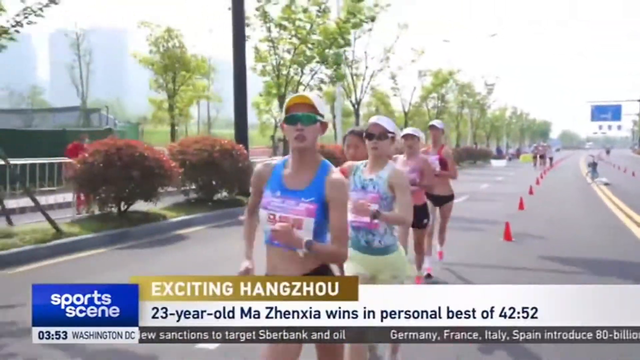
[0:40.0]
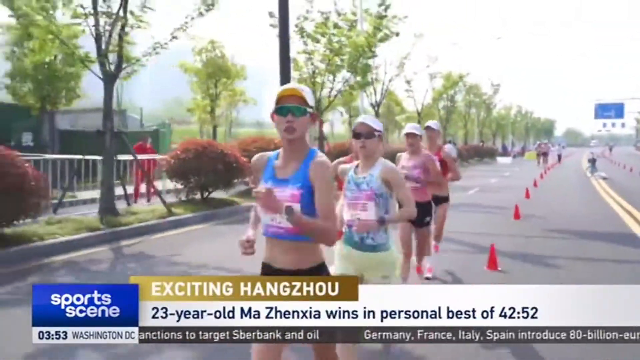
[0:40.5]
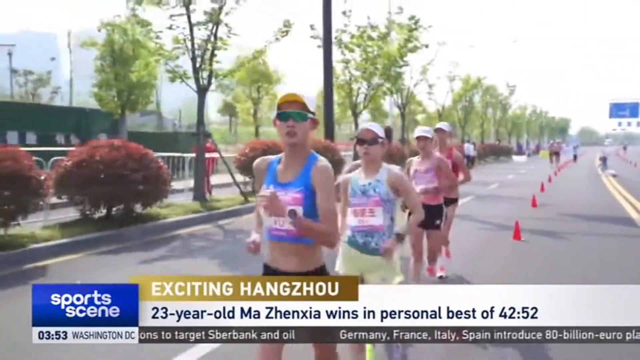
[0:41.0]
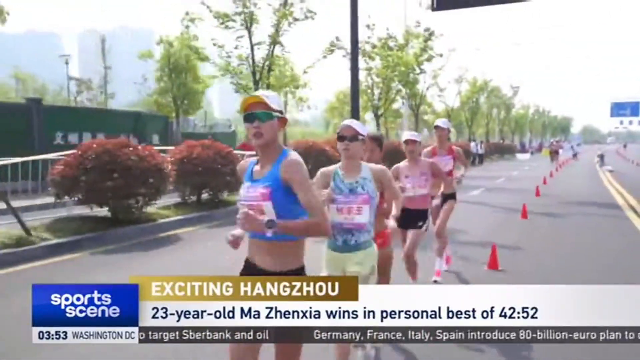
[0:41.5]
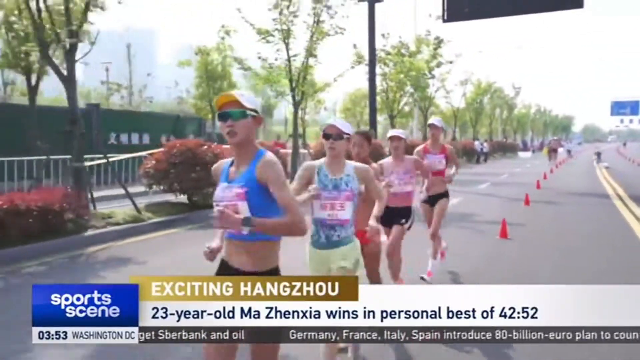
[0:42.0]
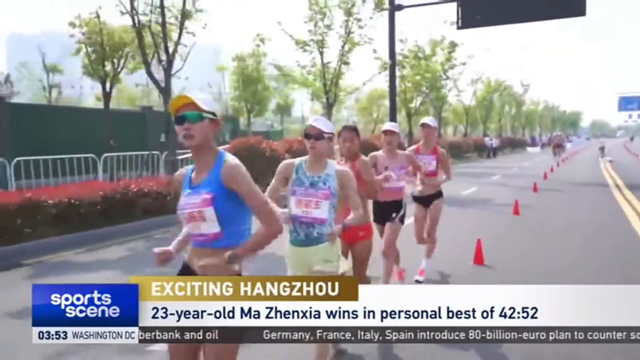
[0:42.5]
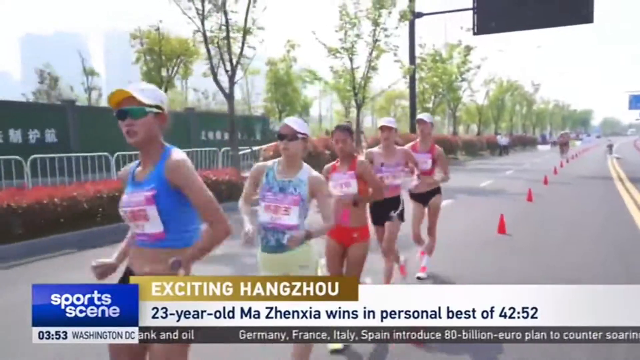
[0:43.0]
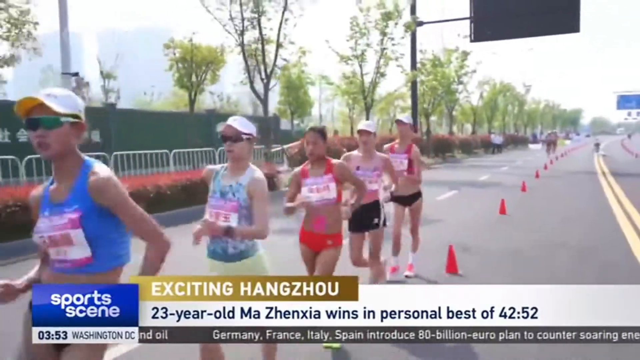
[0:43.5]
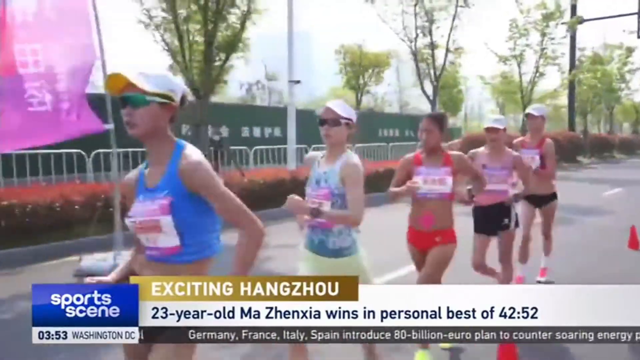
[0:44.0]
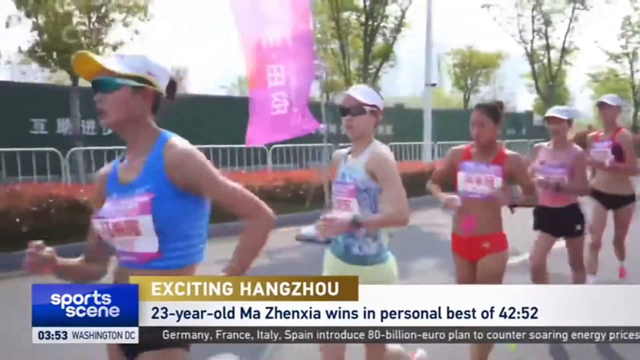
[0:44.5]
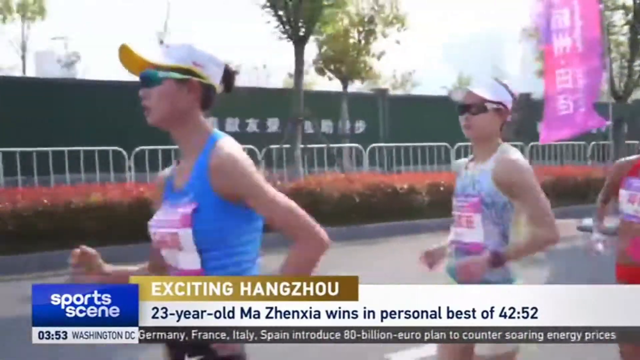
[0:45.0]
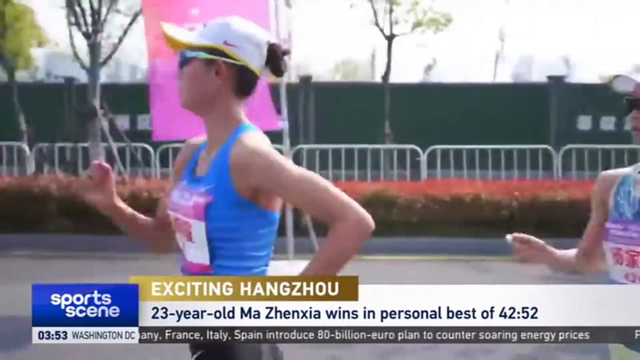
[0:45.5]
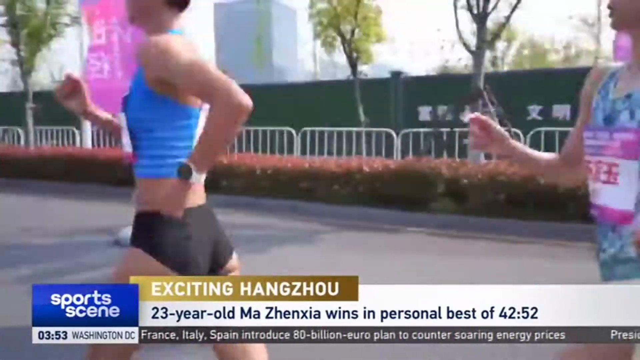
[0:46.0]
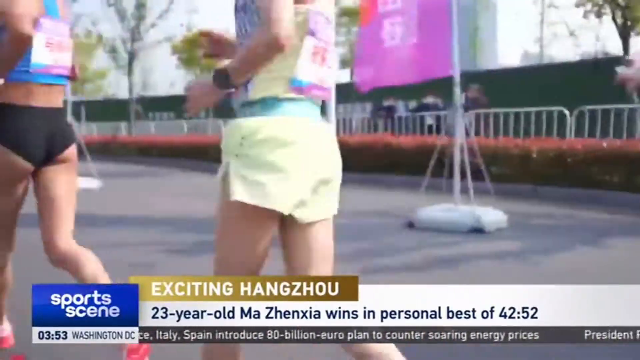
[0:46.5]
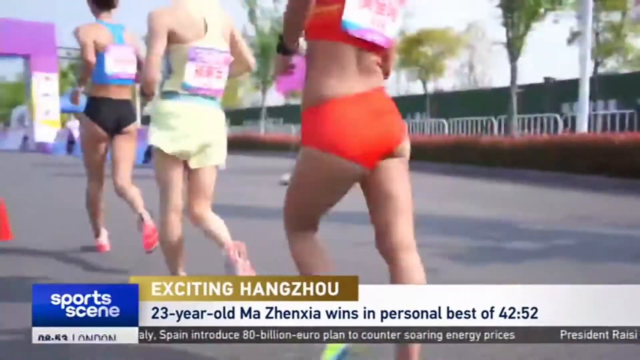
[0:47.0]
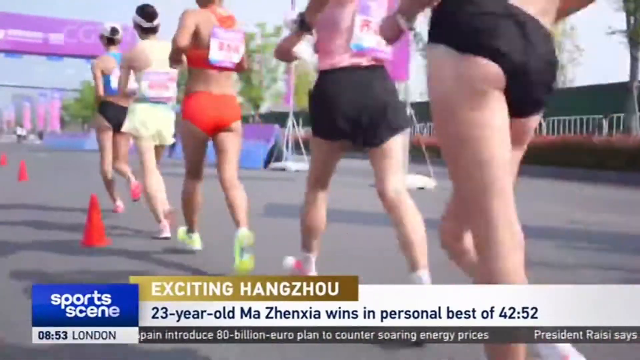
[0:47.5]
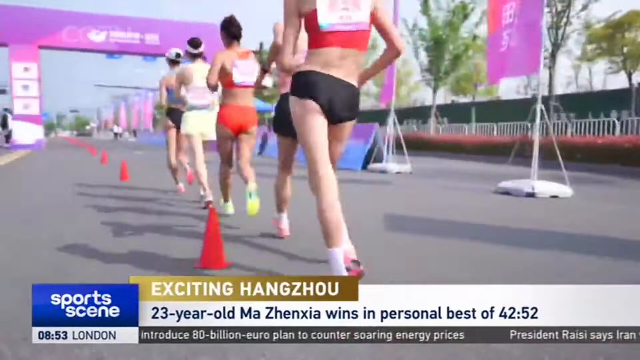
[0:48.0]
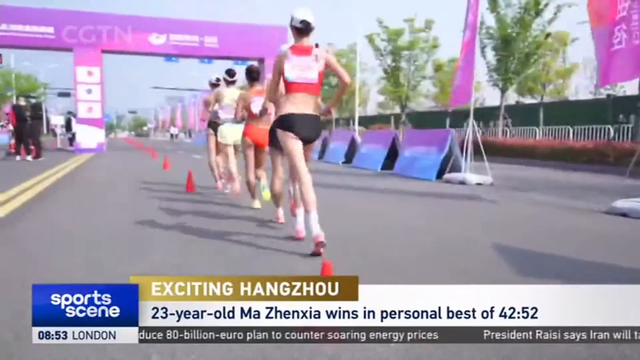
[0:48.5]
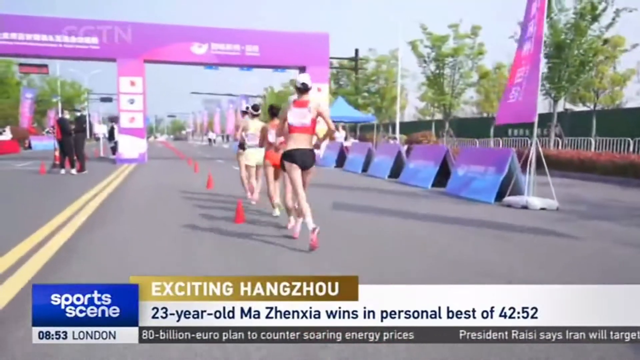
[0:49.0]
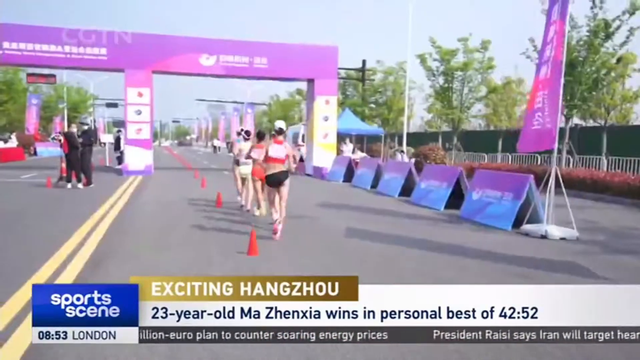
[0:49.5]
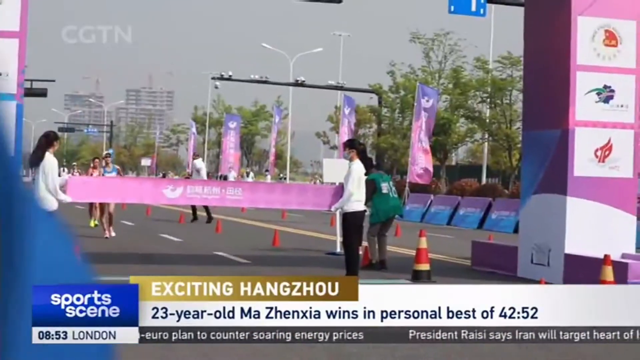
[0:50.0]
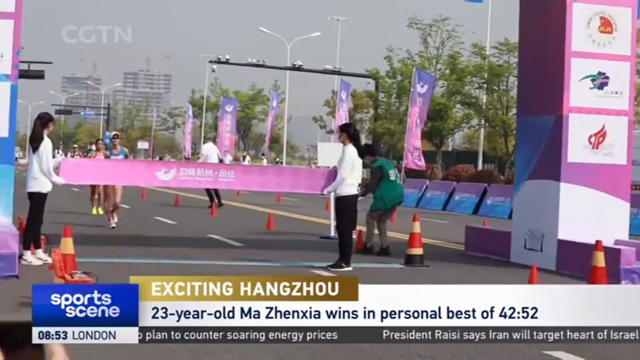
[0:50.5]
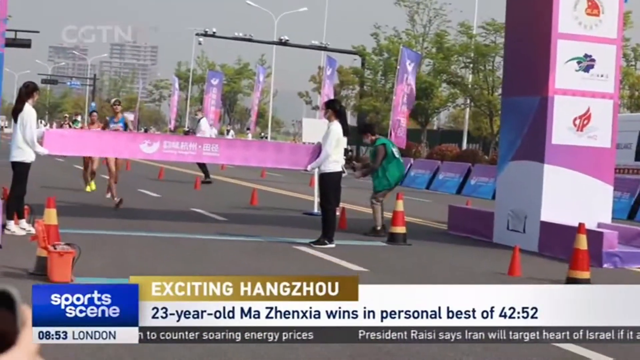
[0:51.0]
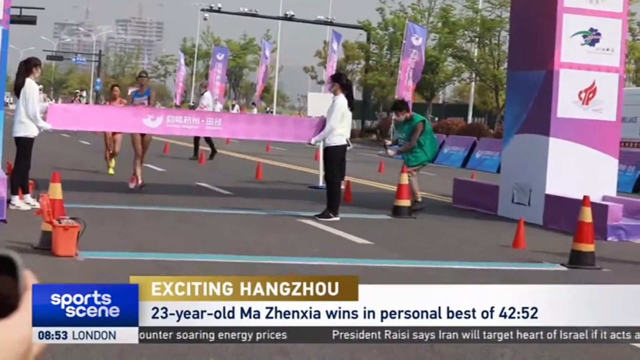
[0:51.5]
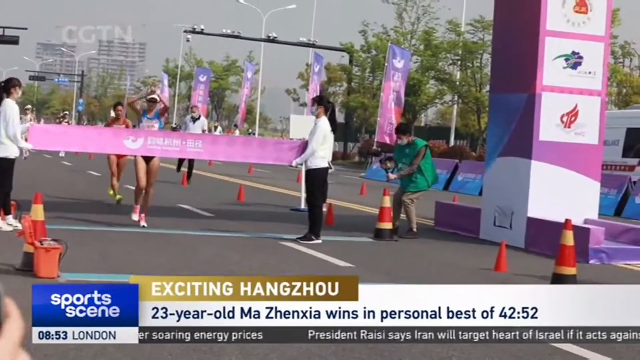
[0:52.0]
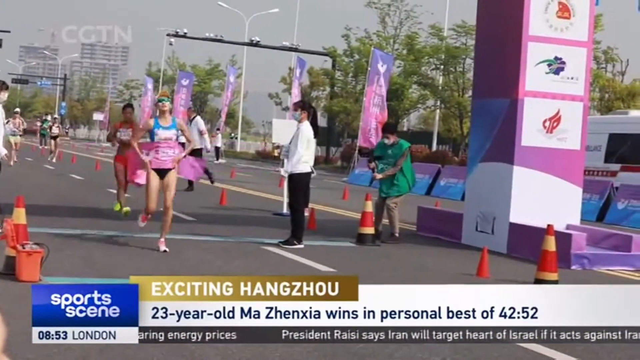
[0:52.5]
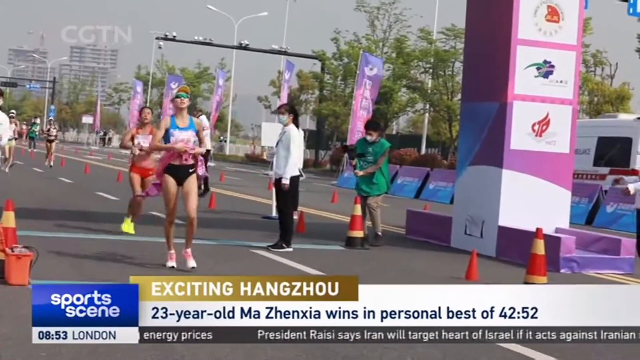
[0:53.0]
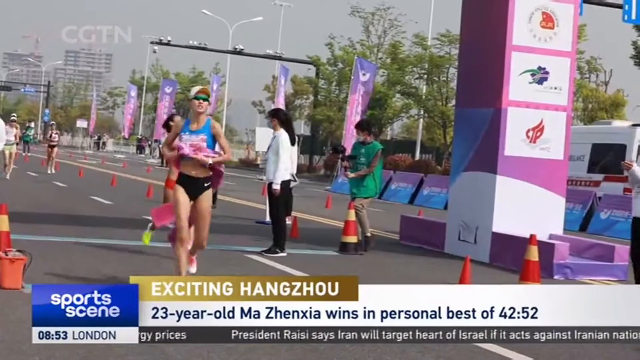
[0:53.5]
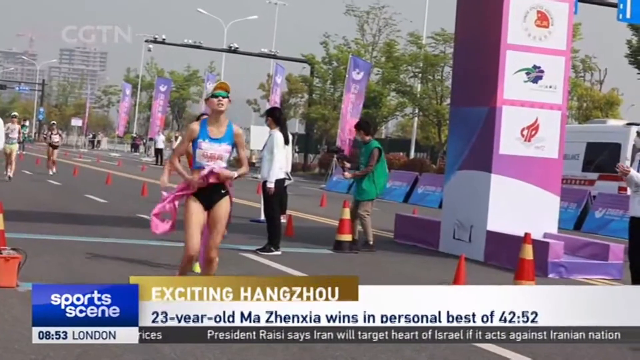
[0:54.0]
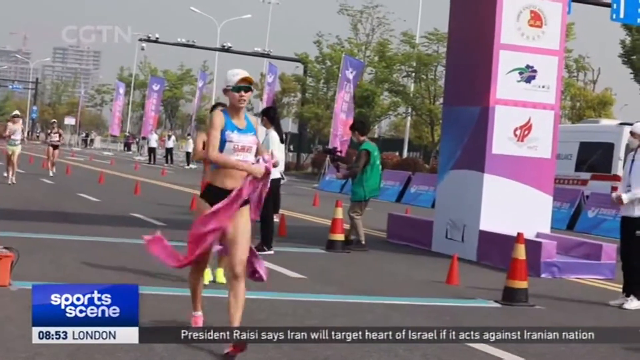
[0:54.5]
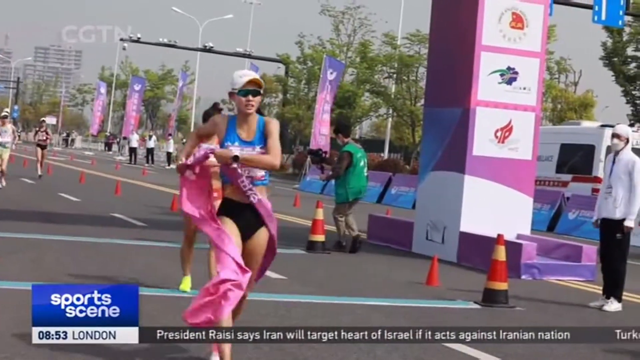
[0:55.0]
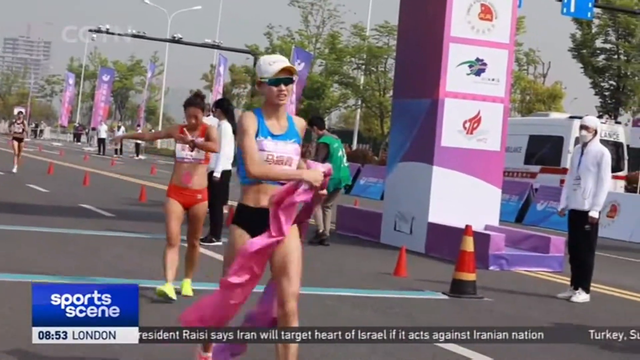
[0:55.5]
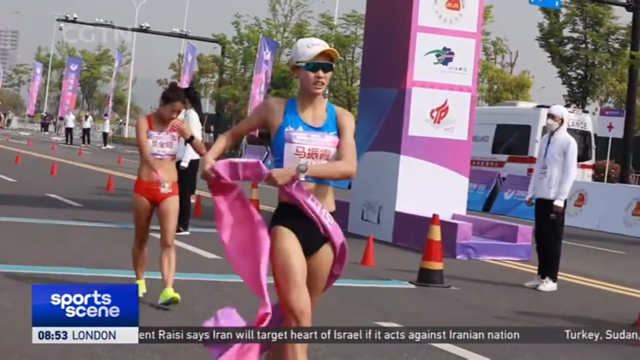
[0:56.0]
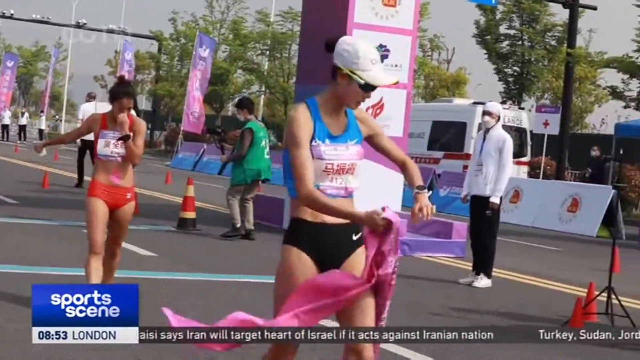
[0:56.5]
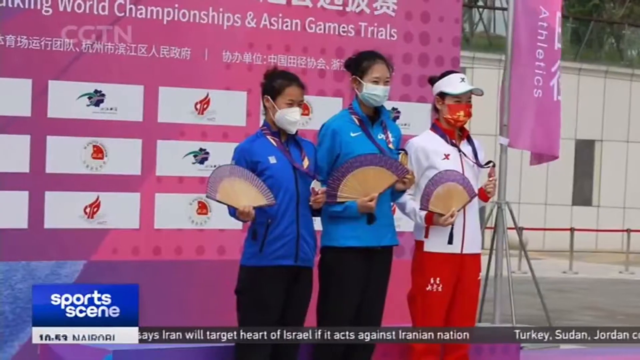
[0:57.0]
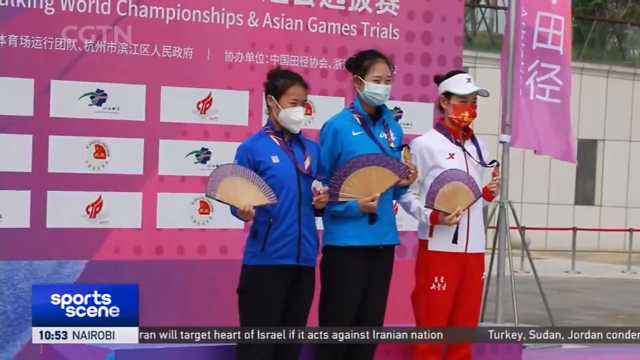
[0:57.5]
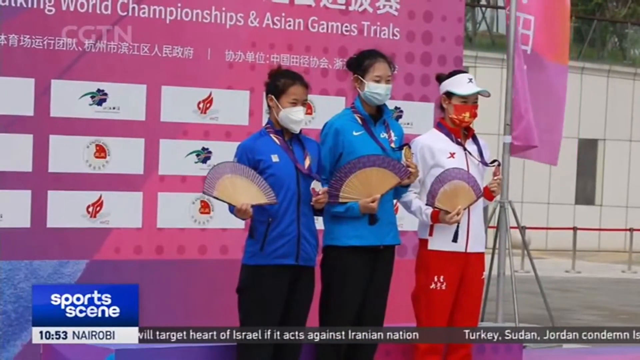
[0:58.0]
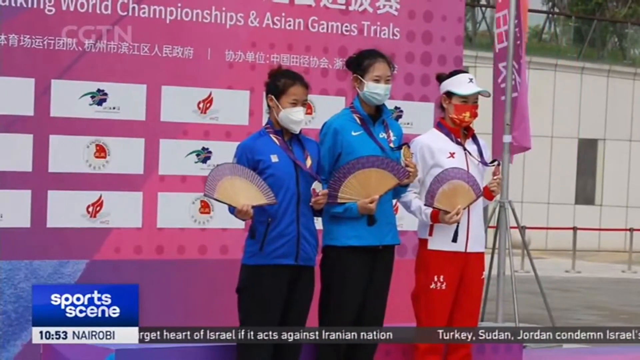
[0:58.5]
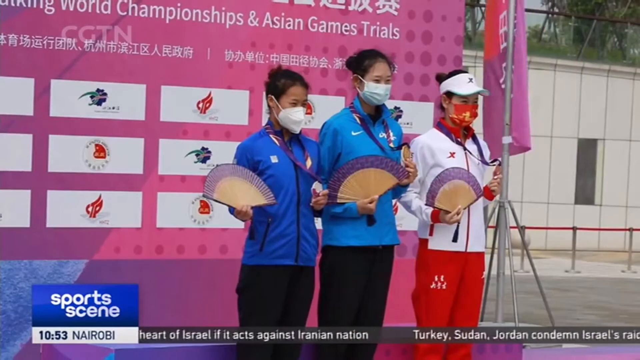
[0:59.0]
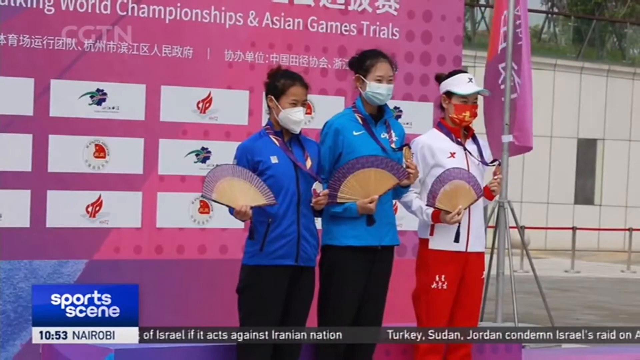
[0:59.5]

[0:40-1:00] A women's race is shown, with text below reading "23-year-old Ma Zhenxia wins." The runners continue down the road, all moving in the same style, almost as if walking as fast as they possibly can instead of running. The winner, wearing a blue tank top, runs through a pink flag, and many other runners follow. At the end, three women in masks, all holding fans, stand in front of a pink banner with the English text "World Championships in Asian Games Trials" alongside text not in English. Two of the women wear blue jackets, and one wears a white one with a white hat.